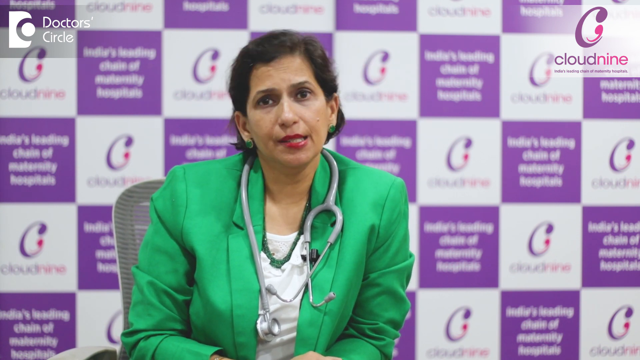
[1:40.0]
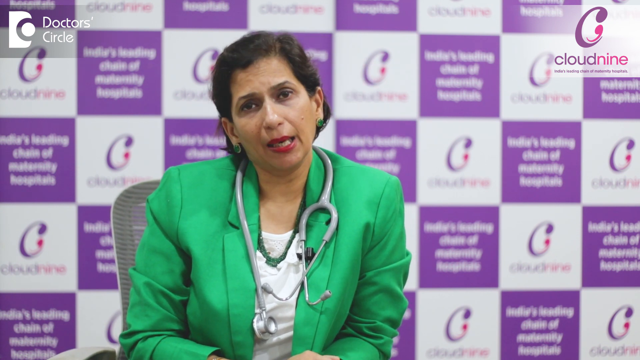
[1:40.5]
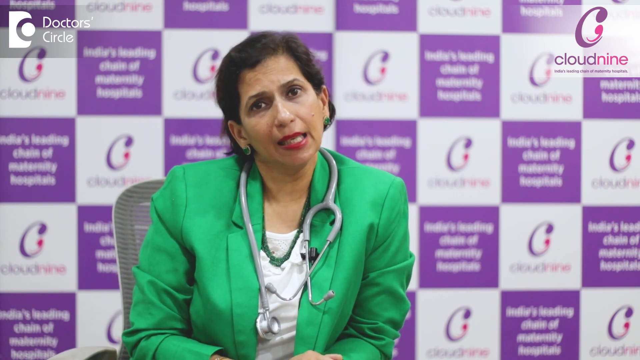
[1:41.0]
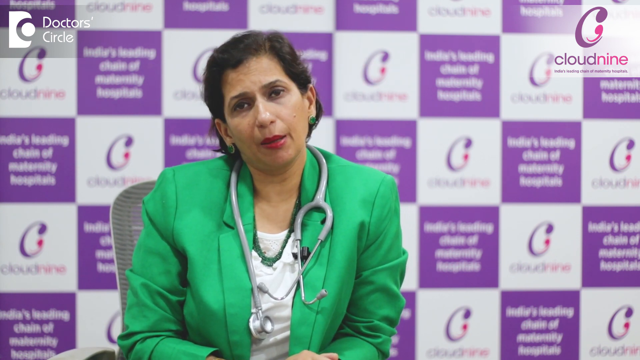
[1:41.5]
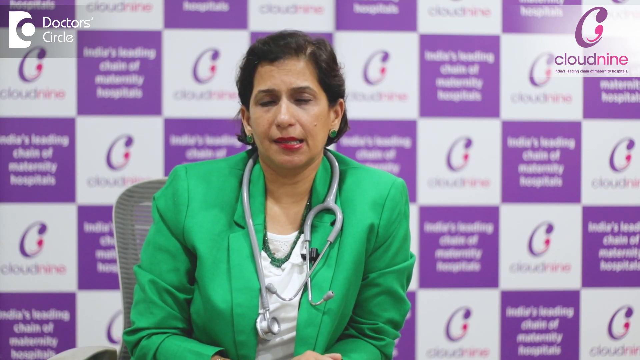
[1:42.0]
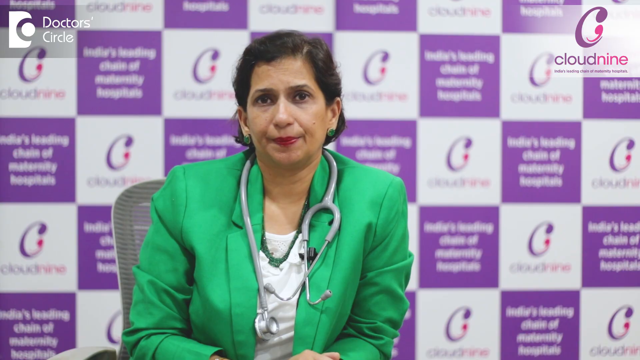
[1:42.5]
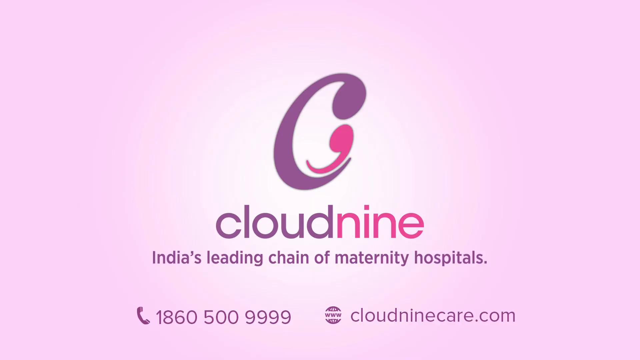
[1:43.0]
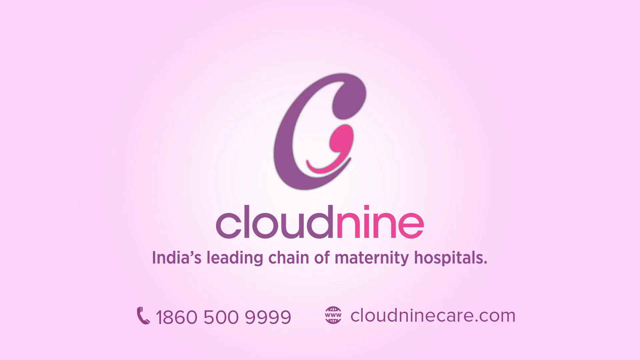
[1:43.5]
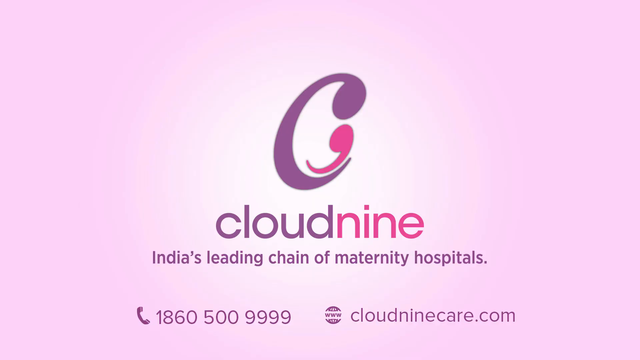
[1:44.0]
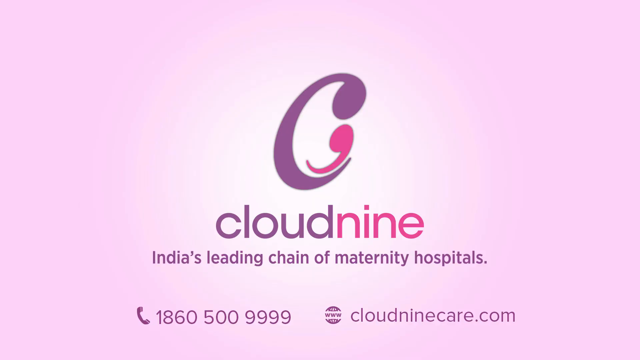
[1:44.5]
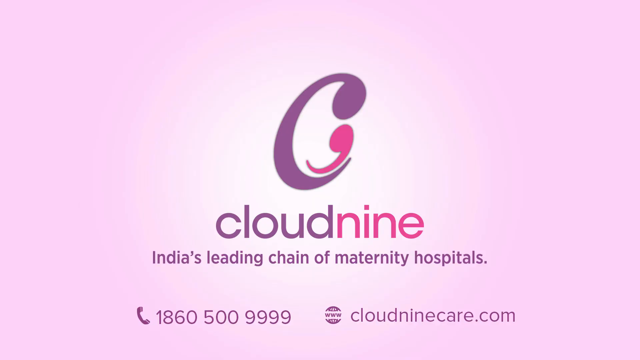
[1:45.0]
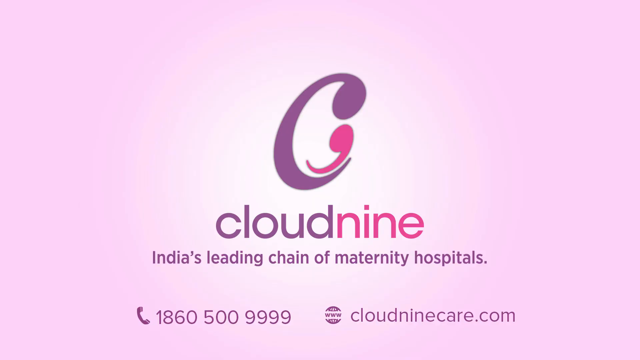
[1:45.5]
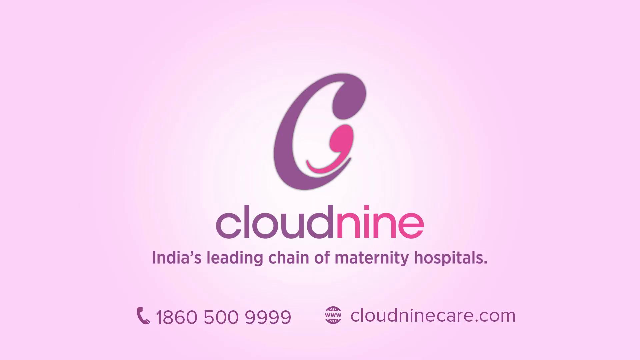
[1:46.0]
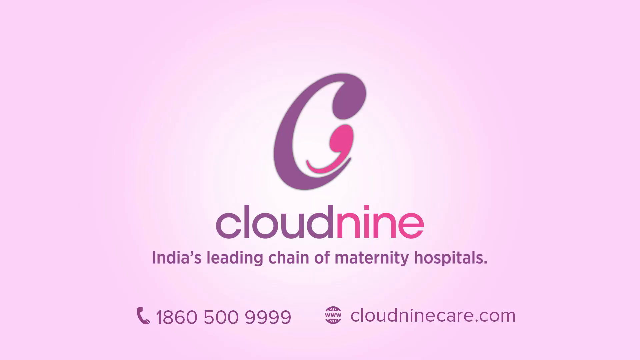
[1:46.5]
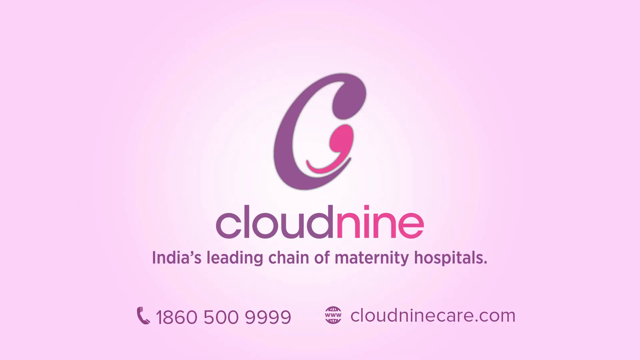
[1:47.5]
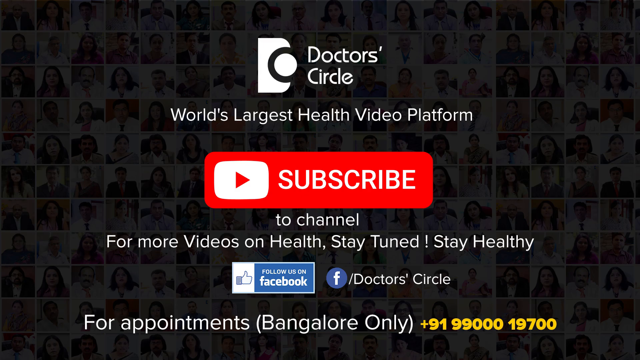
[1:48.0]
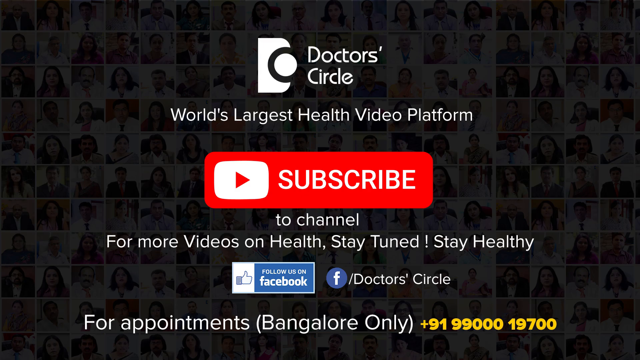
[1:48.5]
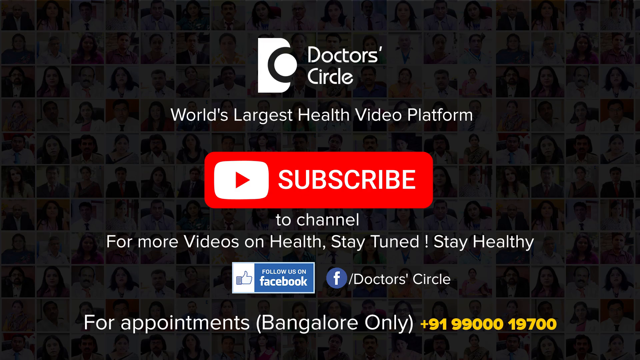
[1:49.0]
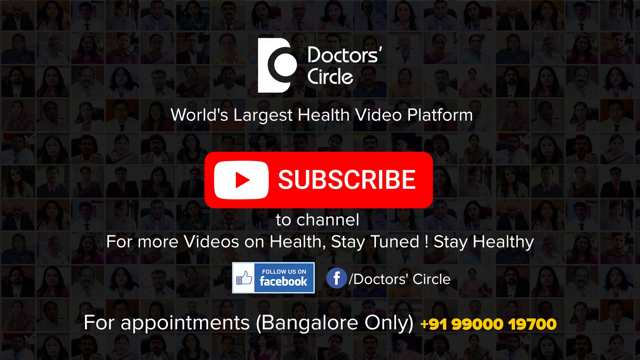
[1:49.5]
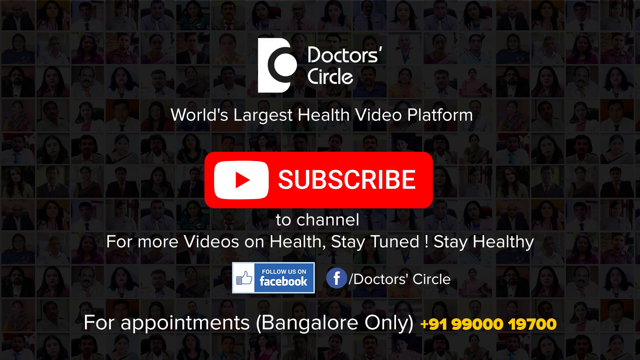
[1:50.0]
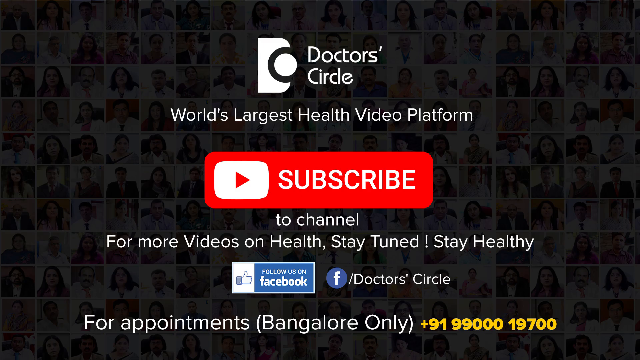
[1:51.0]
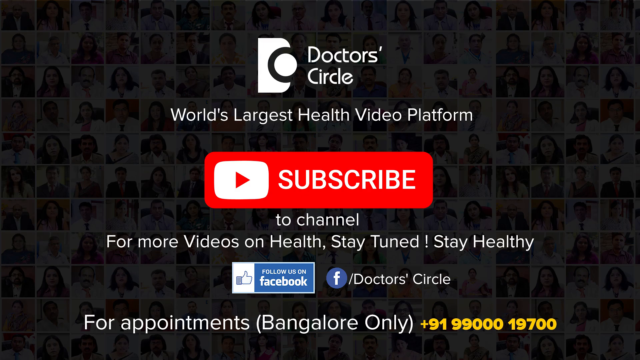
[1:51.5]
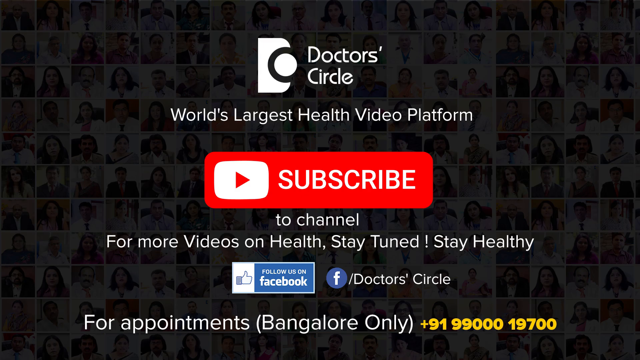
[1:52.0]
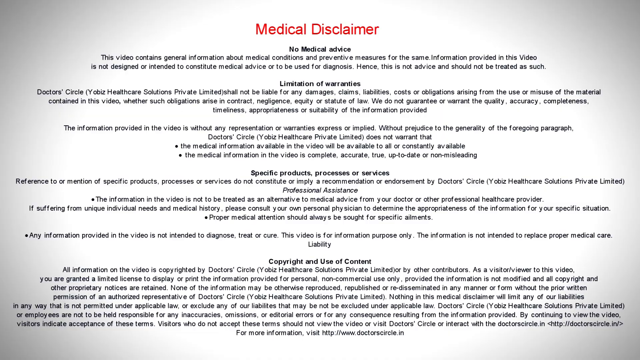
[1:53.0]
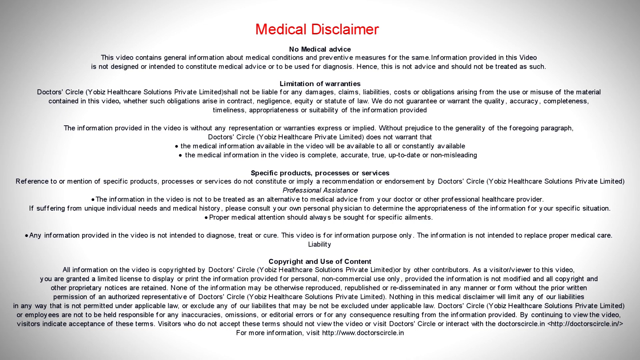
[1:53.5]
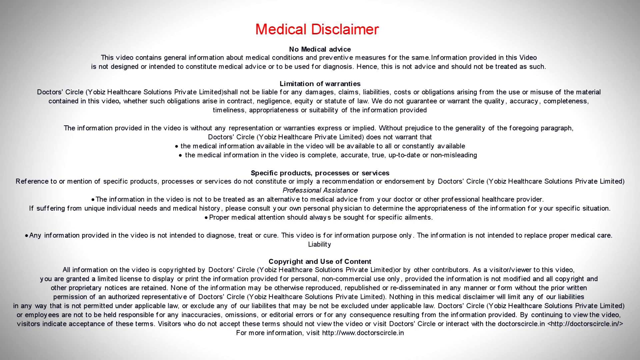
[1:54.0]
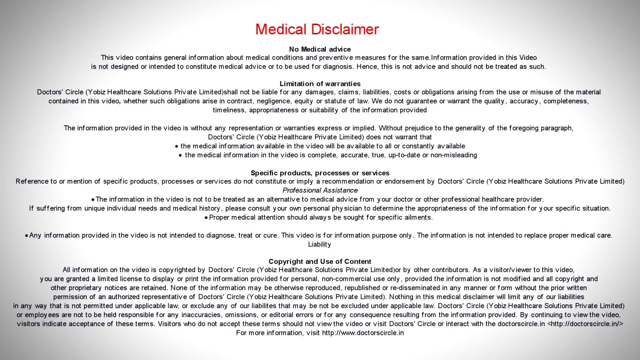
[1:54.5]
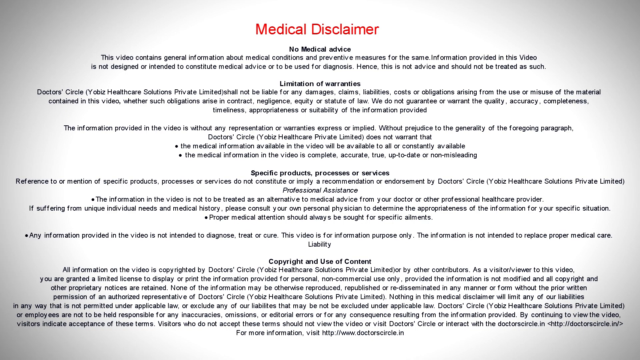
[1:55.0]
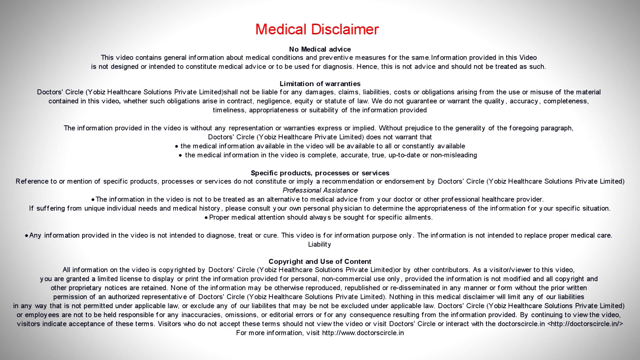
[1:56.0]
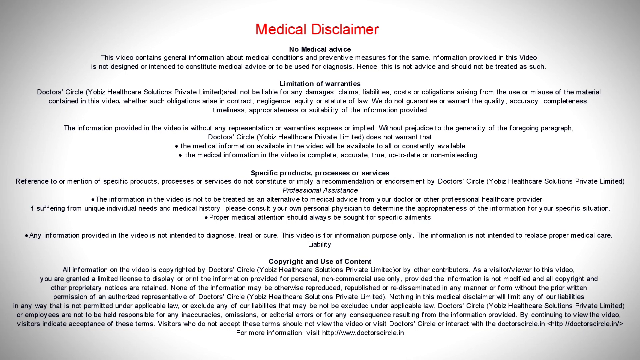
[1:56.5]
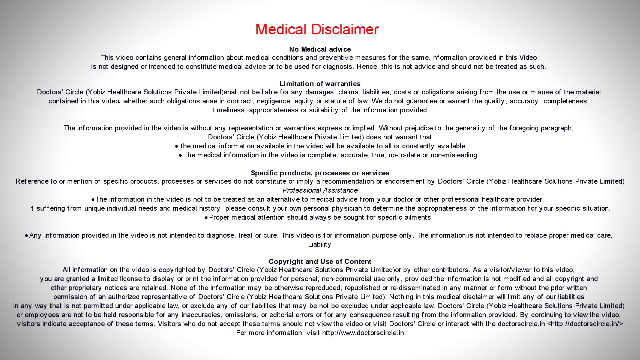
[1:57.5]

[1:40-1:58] A woman in a green blazer with a grey stethoscope around her neck talks to the camera. Her head tilts to the right, then to her left, and her body moves slightly left as well, at least at the shoulders; her shoulders almost rock left and right as she talks. She leans her head toward her right shoulder, shakes it, and moves it back to the center. As her speaking finishes, she centers her body, her head fairly central though slightly turned to her right, her shoulders still favoring the left as it looks like her left elbow is resting on the desk in front of her. She closes her mouth, pressing her red-lipsticked lips together, and looks straight at the camera. The video cuts to text reading "cloud nine, India's leading chain of maternity hospitals" with a purple C and a pink nine in the center of the frame, and a phone number and an email address at the bottom. Next, a large white "subscribe" appears in a red box in the center of the screen, with "Dr Circle" and "world's largest health video platform" written at the top, followed by "subscribe to video for more videos on health. Stay tuned. Stay healthy." The background is full of individual headshots of people, each framed with a white border. Then red text at the top reads "medical disclaimer", followed by a lot more text about the validity of the health information and how to take it.